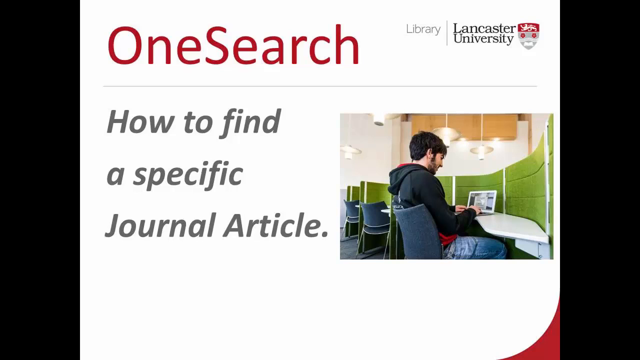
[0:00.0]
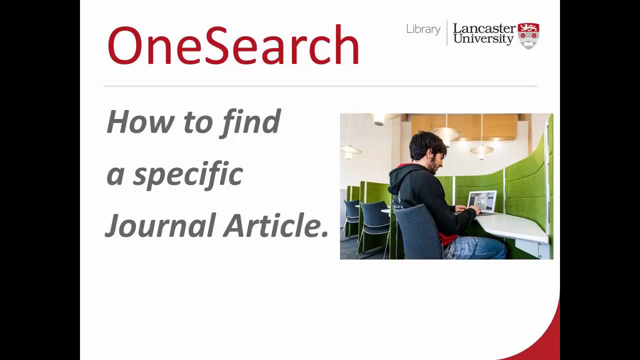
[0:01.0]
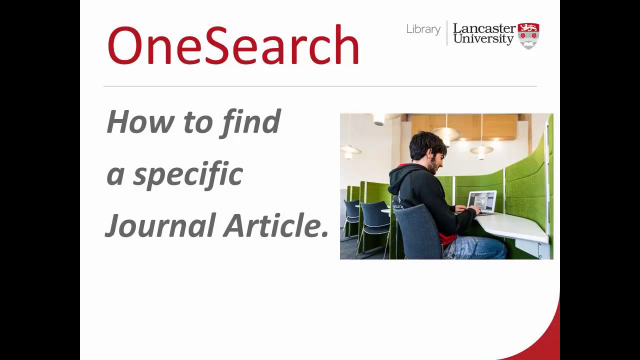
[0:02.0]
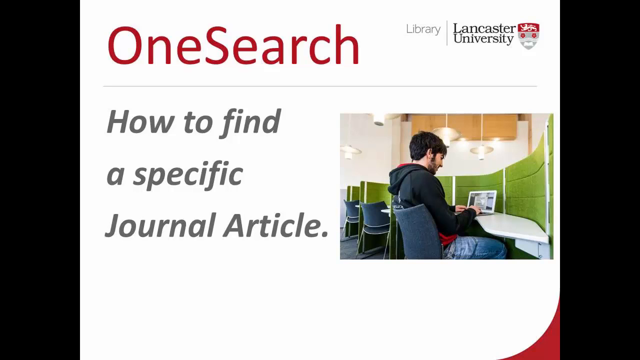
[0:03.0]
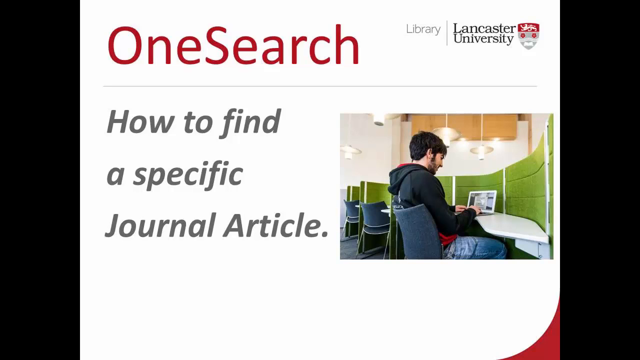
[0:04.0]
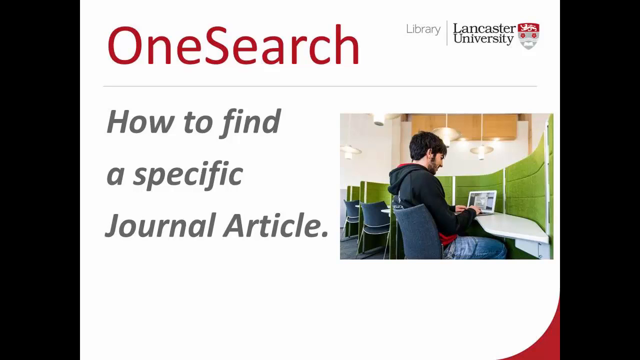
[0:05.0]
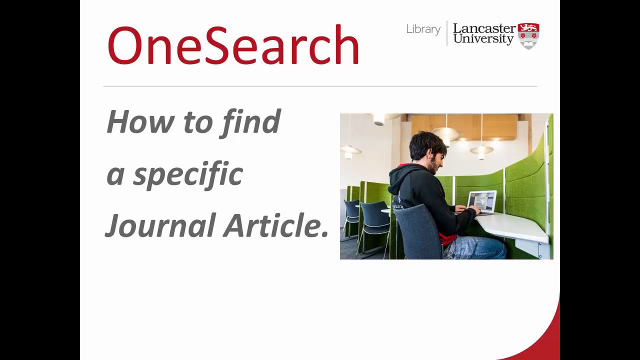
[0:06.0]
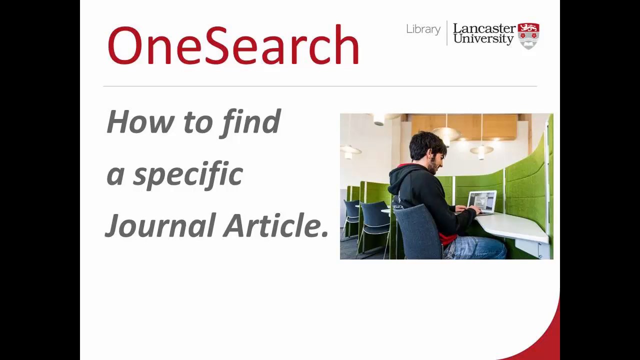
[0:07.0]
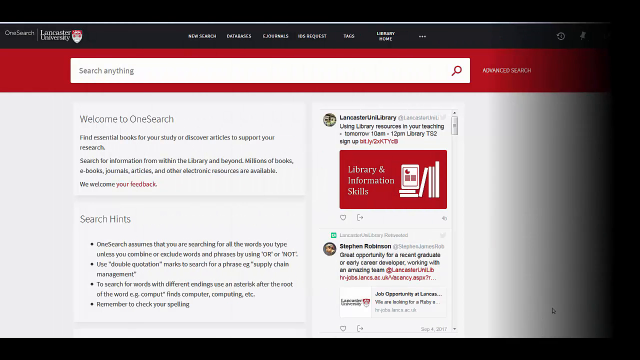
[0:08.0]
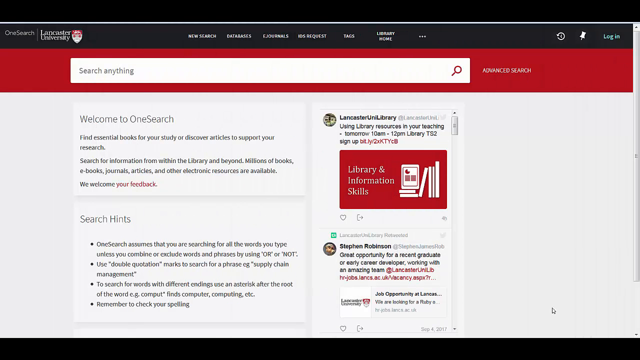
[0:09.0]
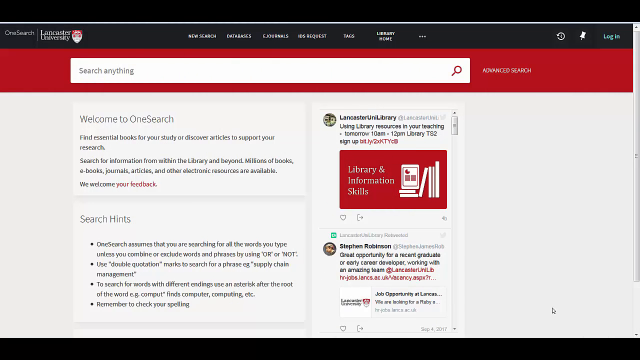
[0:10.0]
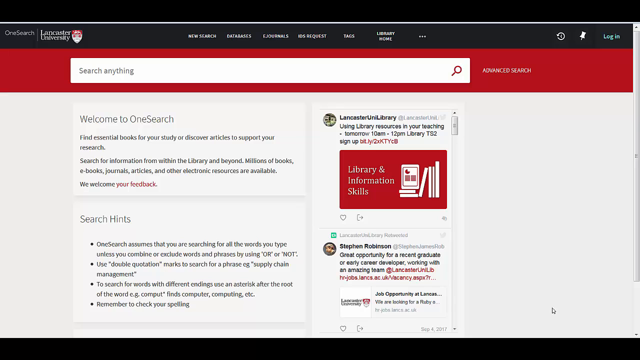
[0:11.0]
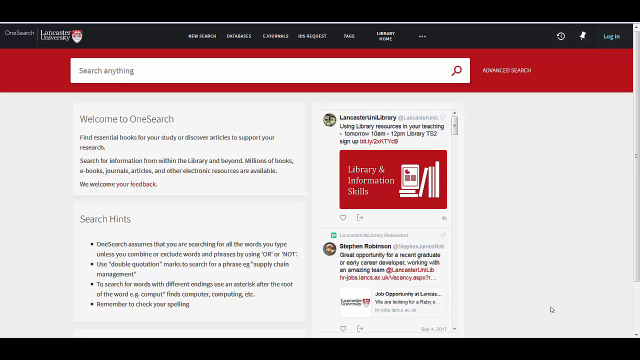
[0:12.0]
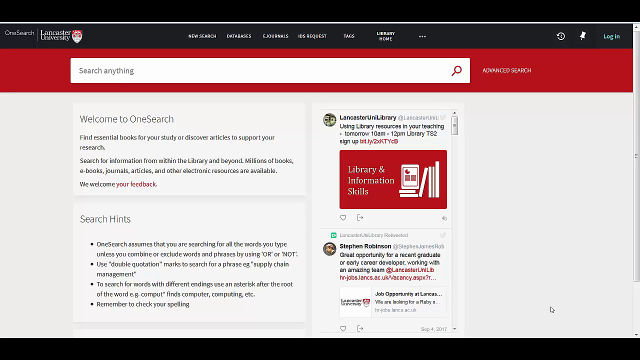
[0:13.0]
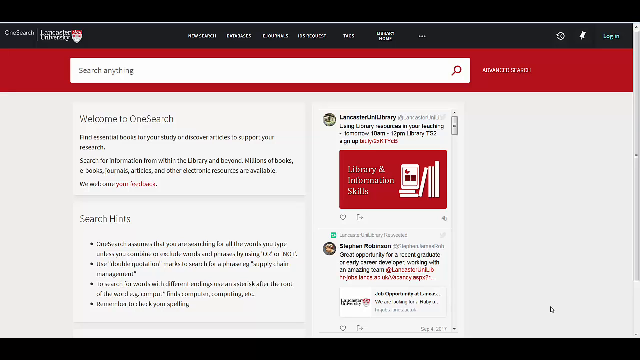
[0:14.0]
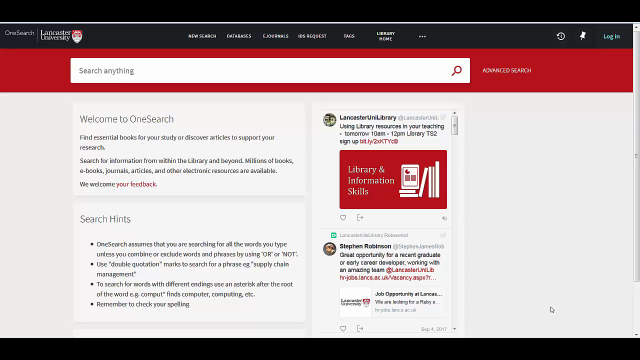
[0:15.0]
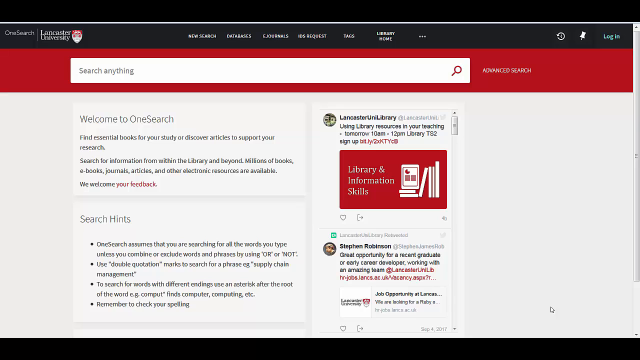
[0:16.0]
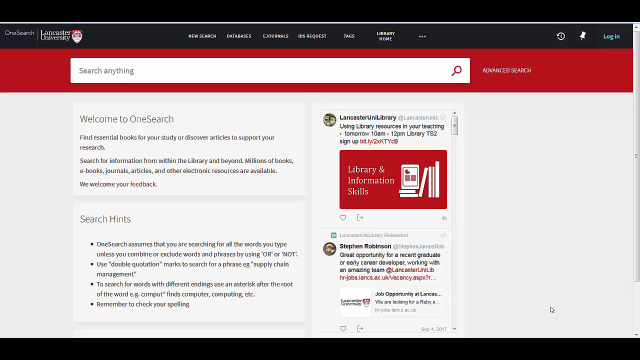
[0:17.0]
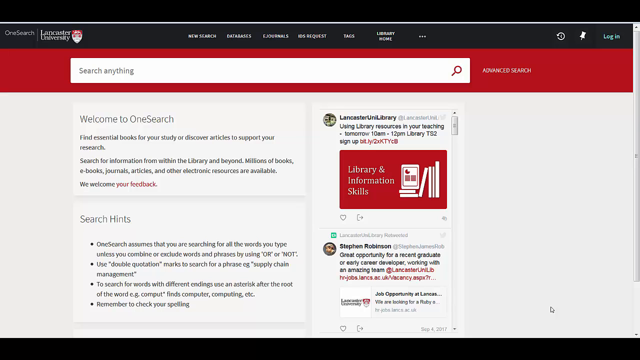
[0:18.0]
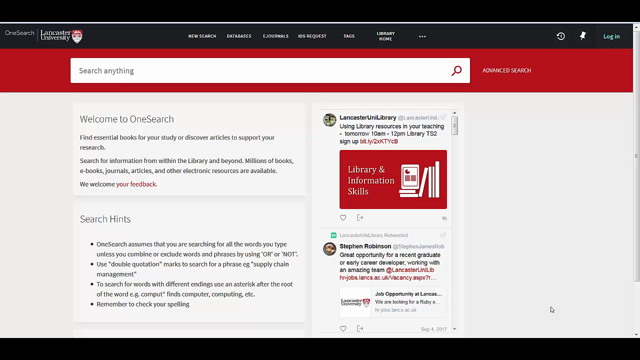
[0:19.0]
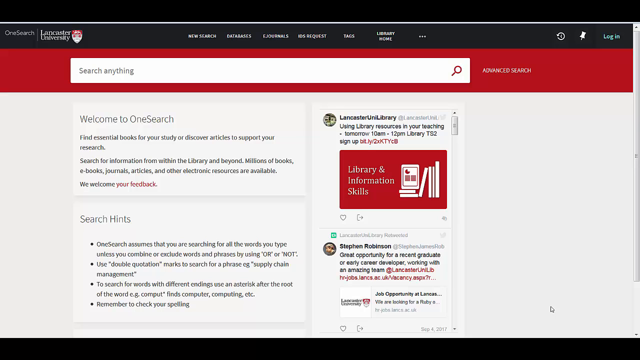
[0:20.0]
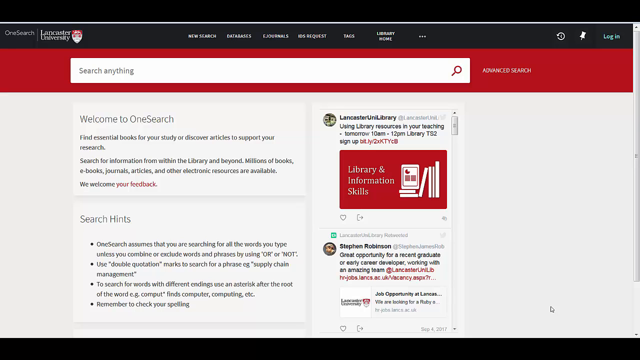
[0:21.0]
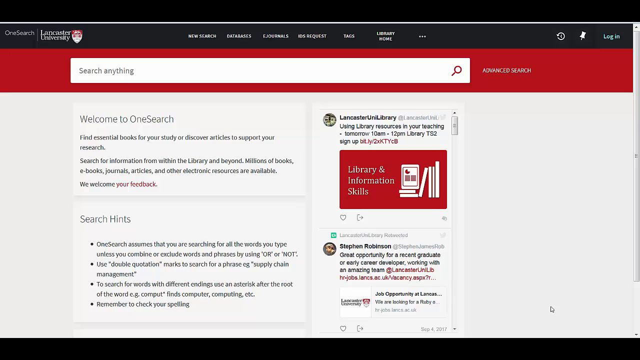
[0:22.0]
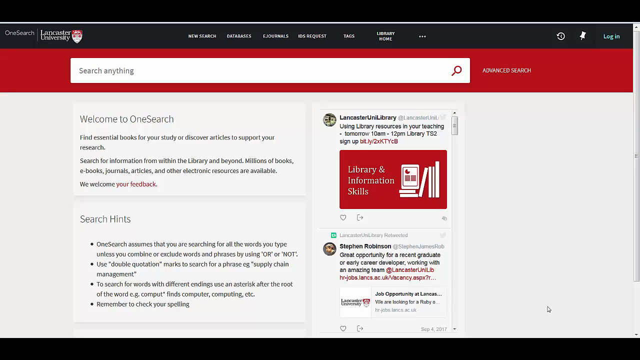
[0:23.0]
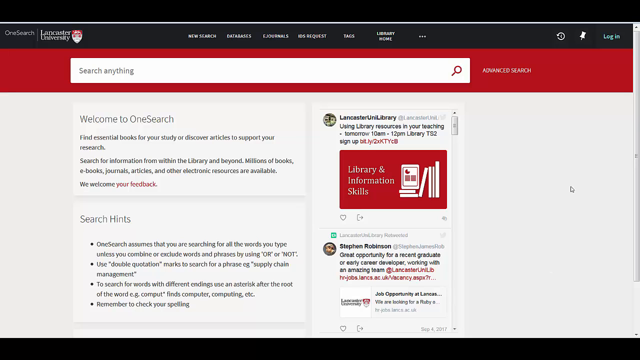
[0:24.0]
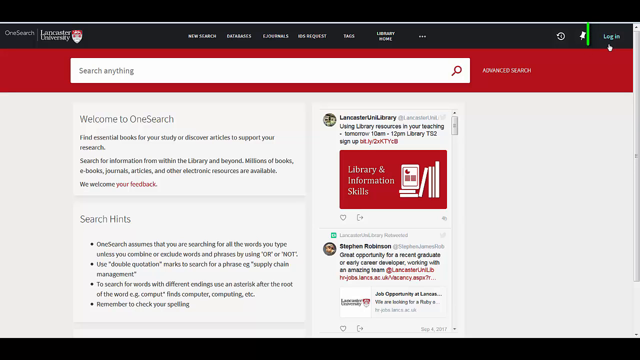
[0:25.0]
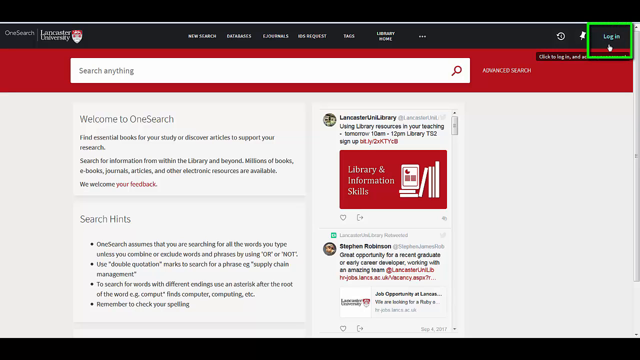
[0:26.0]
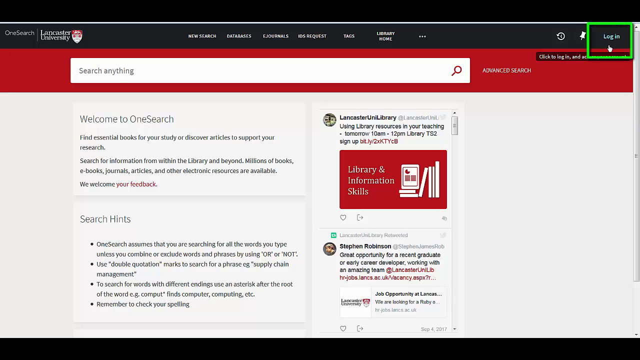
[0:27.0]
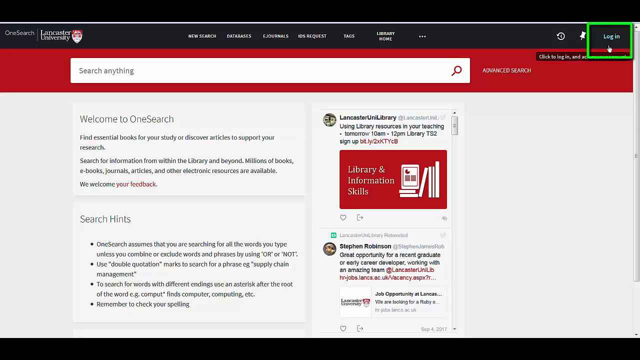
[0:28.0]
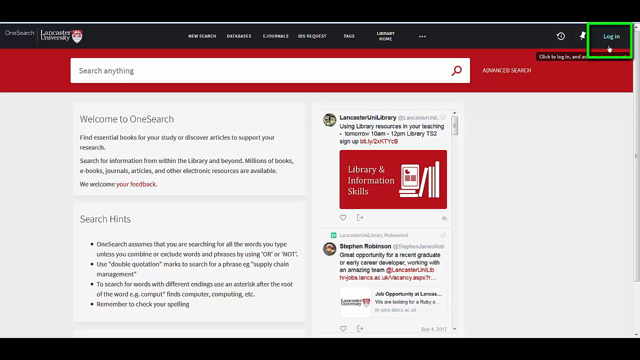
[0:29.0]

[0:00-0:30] A page shows the word "OneSearch" in red at the top. On the right-hand side are the words "library" with "Lancaster University" in the top right-hand corner. Underneath "OneSearch", grey text reads "how to find a specific journal article". To the right of this is an image of a man sitting in what looks like a library setting; he is on a laptop and has black hair and a black hoodie. The video then moves to what looks to be a picture of someone's computer screen, with a black and red bar at the top and "Lancaster University" written at the top of the screen. Underneath this is "welcome to one search", and there is a search bar at the top of the page. The words on the screen are small and difficult to read, but the words "search hints" are visible on the page.